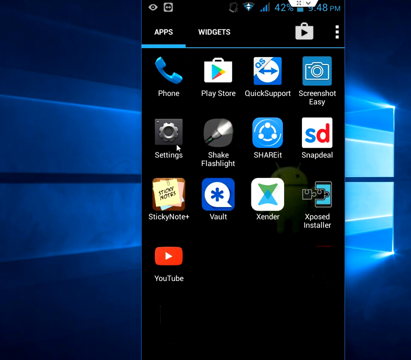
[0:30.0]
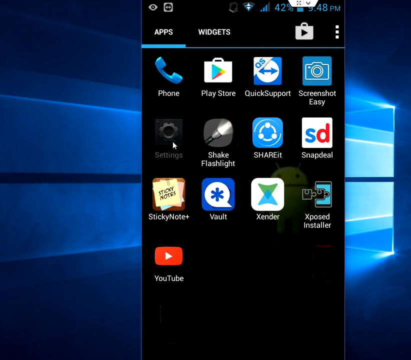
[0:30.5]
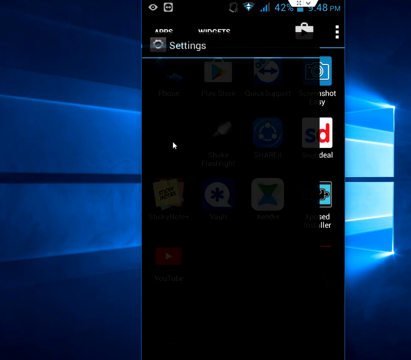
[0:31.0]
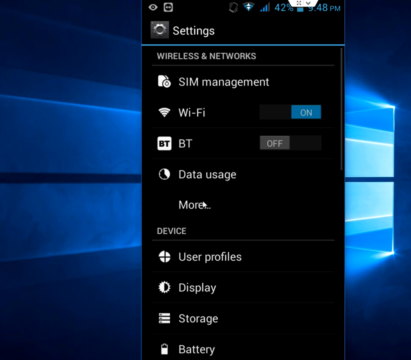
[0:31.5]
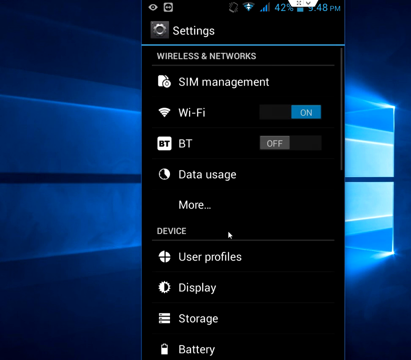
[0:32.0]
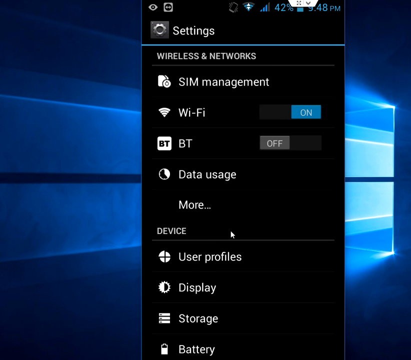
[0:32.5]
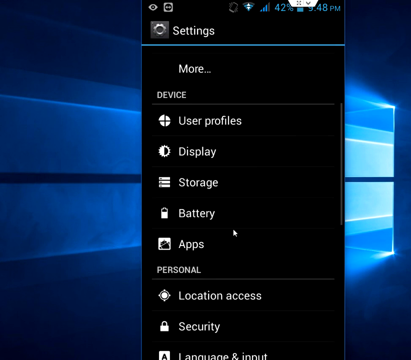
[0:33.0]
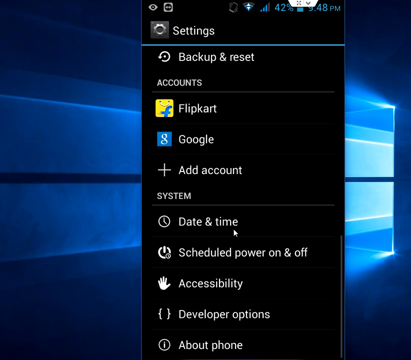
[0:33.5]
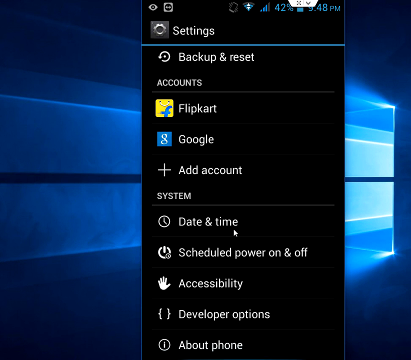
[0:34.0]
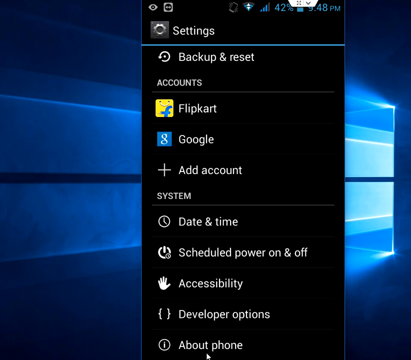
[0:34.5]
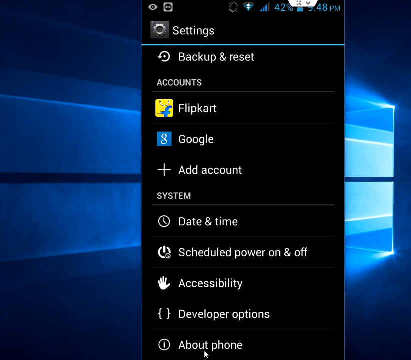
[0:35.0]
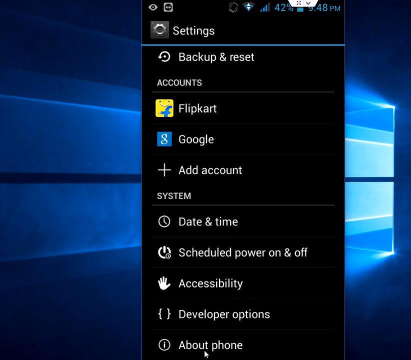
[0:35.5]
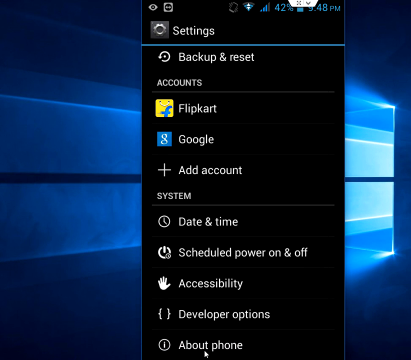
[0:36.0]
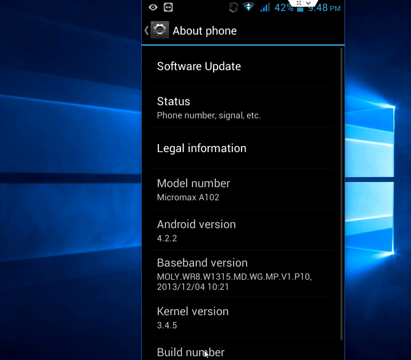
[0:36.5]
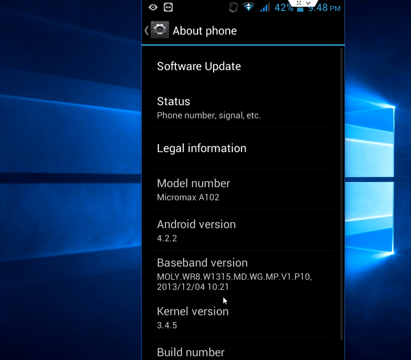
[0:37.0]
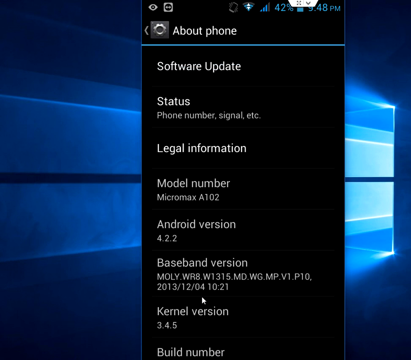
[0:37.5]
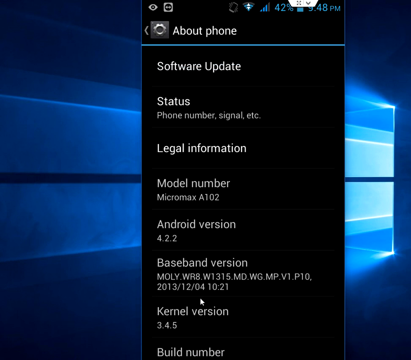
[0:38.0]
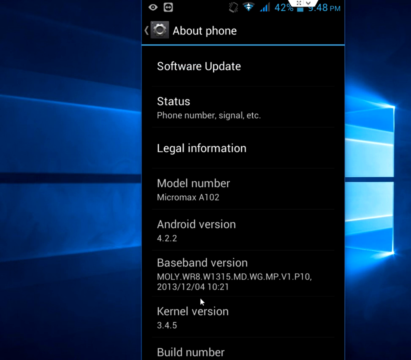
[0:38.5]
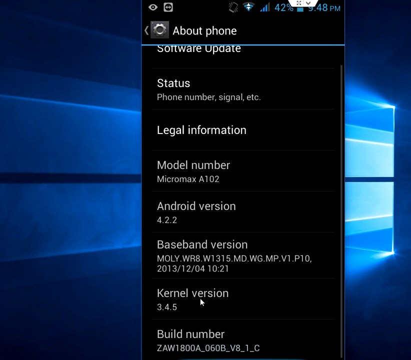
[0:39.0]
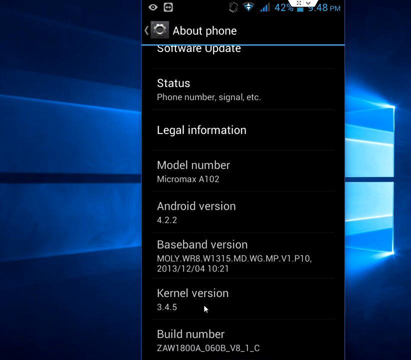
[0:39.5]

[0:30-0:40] The settings section opens. A wireless and network section lists SIM management, Wi-Fi toggled on, BT toggled off, data usage, and a more option with three dots after it. Below it is a heading that says "device", under which are user profiles, display, and storage. The list scrolls down to show battery, location access, security, languages and input, and backup and reset. Under the accounts heading are Flipkart and Google, plus an option to add an account. Under system are date and time, scheduled power on and off, accessibility, and developer options, and below these is about phone. The mouse clicks on about phone and a new screen opens. It shows software update, status with a subheading of phone number, signal, et cetera, legal information, model number showing Micromax A102, Android version showing 4.2.2, baseband version showing "MOLY.WR8.W1315.MD.WG.MP.V1.P10.A102" followed by "2.13.12.04" with a time of 10.21, kernel version showing 3.4.5, and then build number. The mouse clicks on build number.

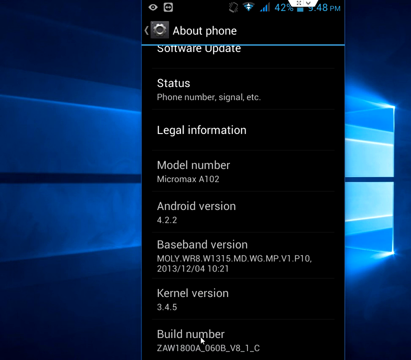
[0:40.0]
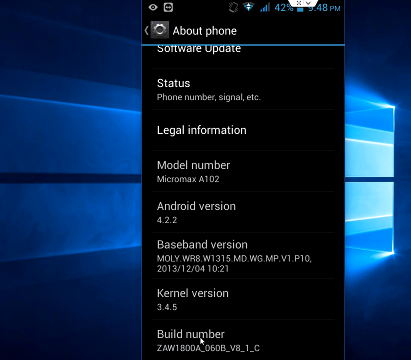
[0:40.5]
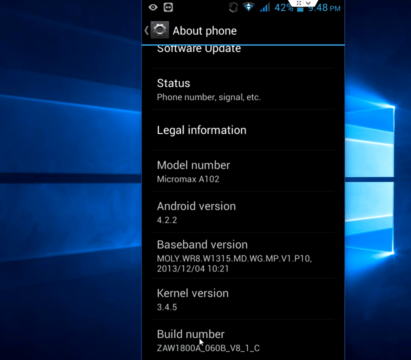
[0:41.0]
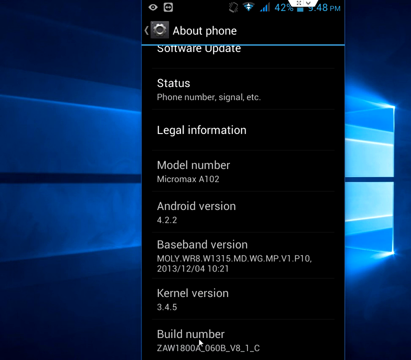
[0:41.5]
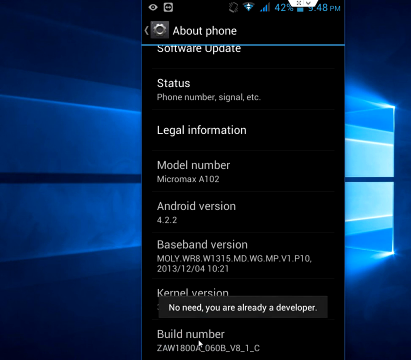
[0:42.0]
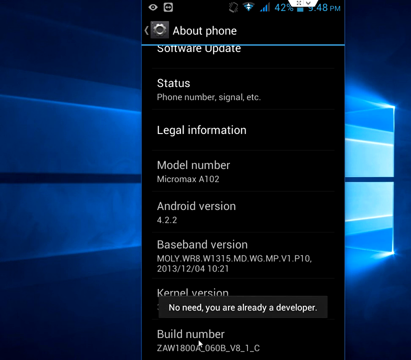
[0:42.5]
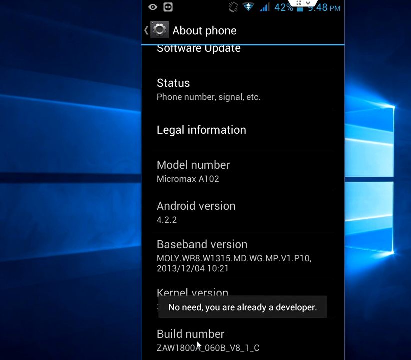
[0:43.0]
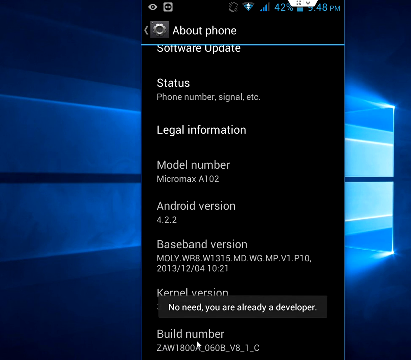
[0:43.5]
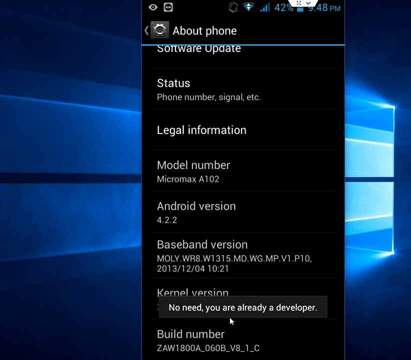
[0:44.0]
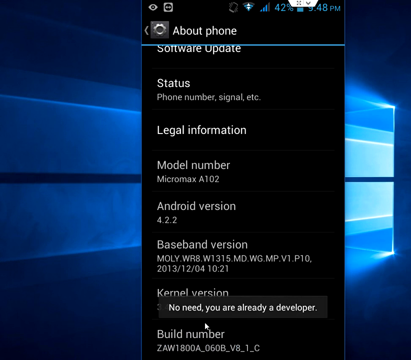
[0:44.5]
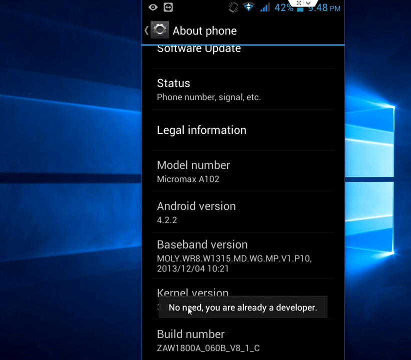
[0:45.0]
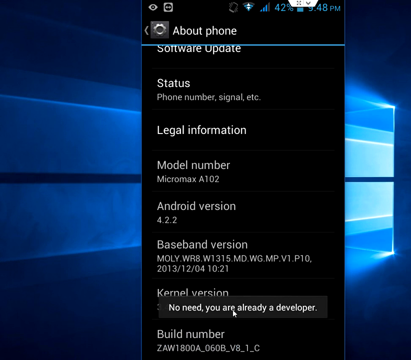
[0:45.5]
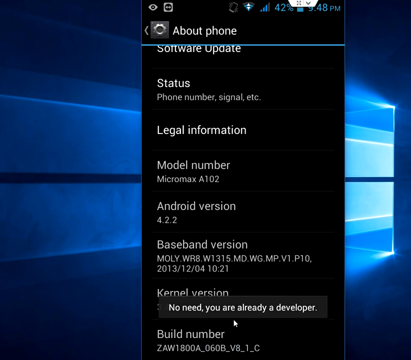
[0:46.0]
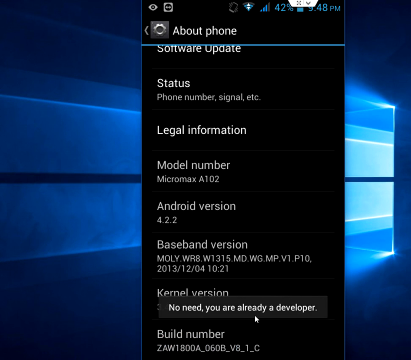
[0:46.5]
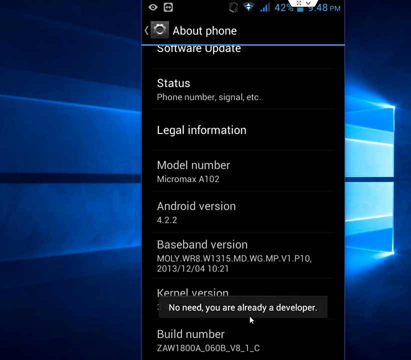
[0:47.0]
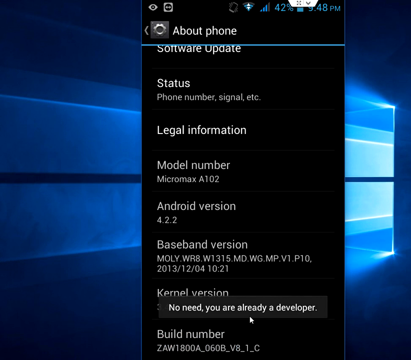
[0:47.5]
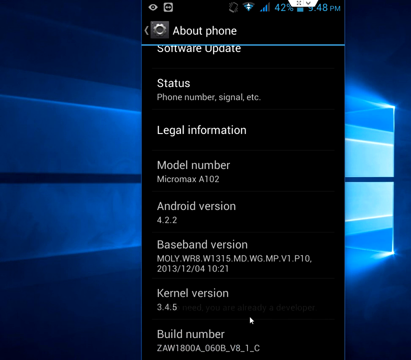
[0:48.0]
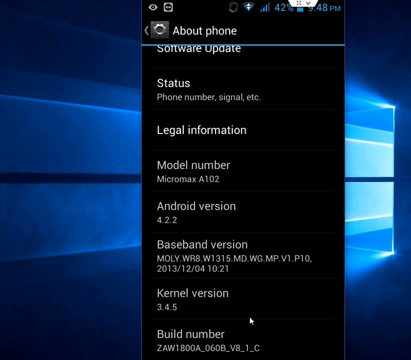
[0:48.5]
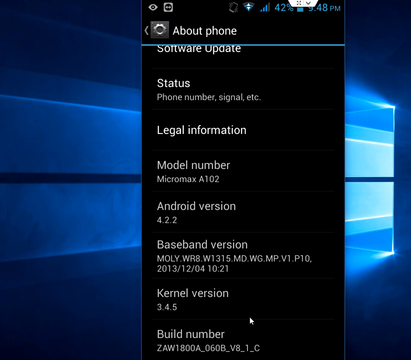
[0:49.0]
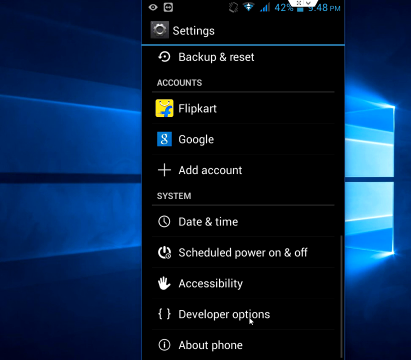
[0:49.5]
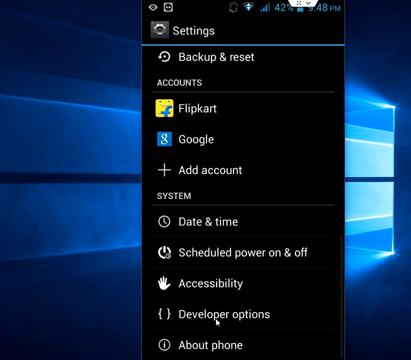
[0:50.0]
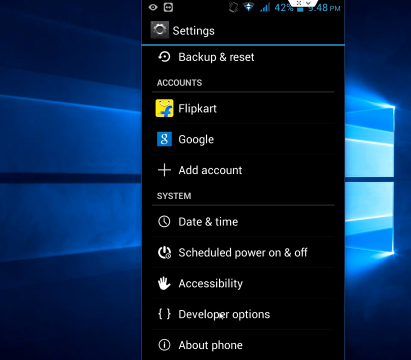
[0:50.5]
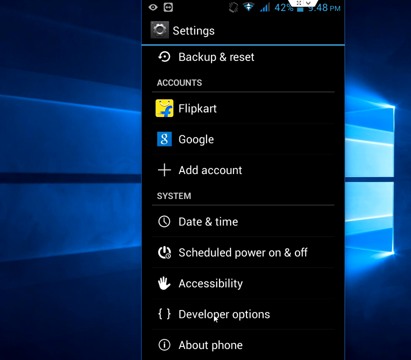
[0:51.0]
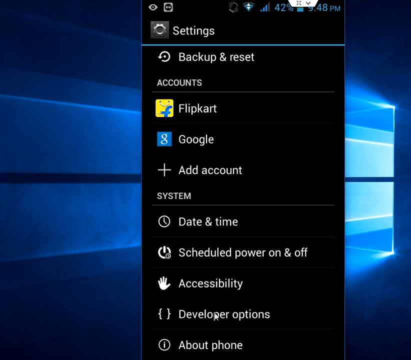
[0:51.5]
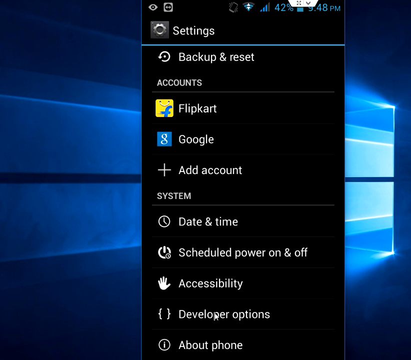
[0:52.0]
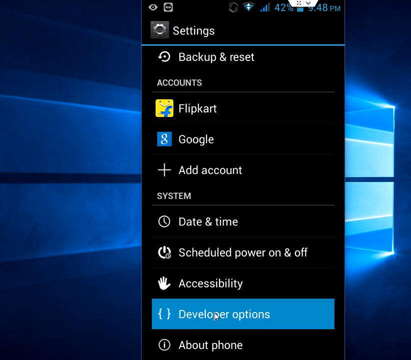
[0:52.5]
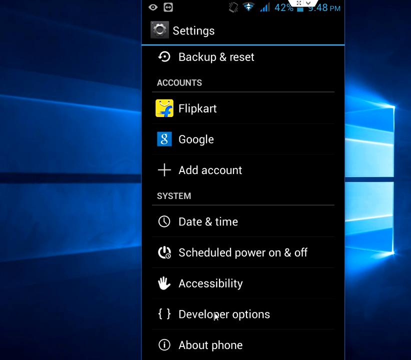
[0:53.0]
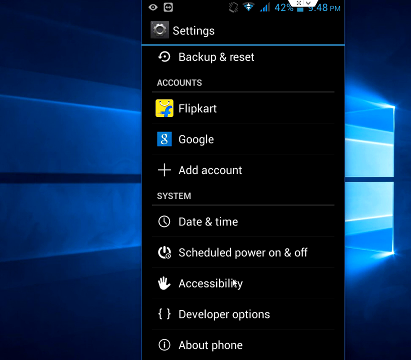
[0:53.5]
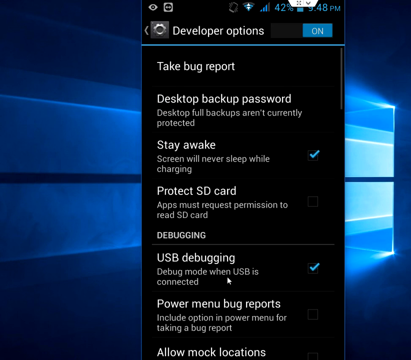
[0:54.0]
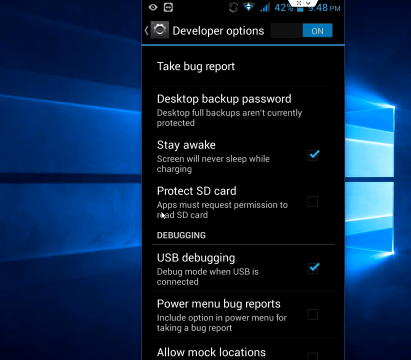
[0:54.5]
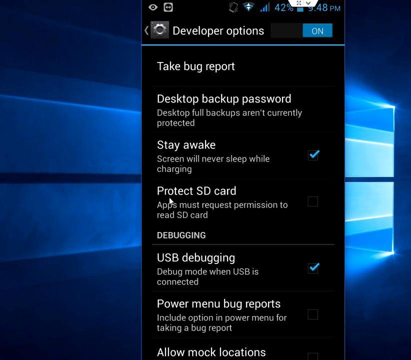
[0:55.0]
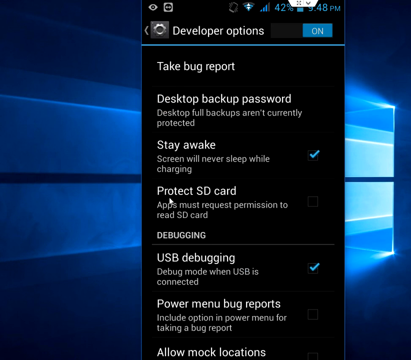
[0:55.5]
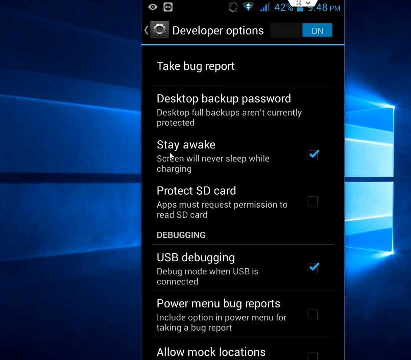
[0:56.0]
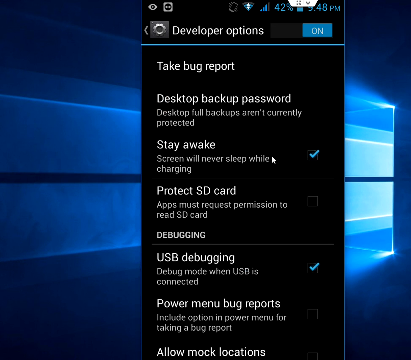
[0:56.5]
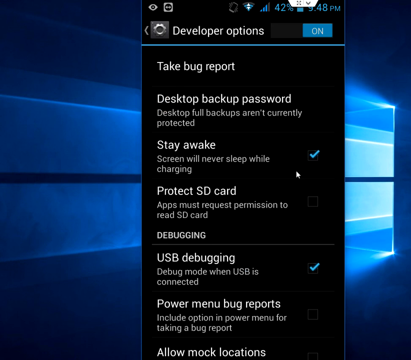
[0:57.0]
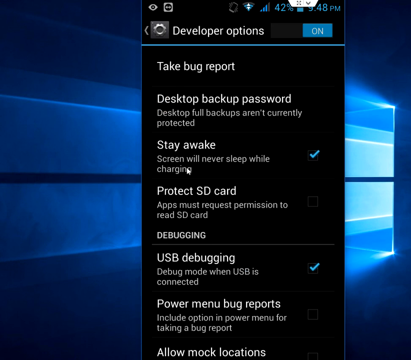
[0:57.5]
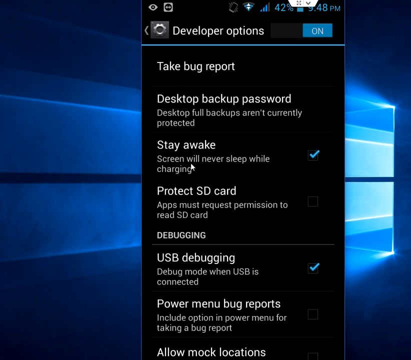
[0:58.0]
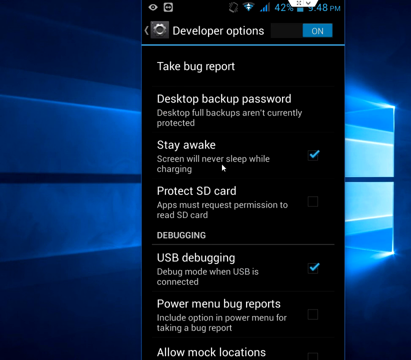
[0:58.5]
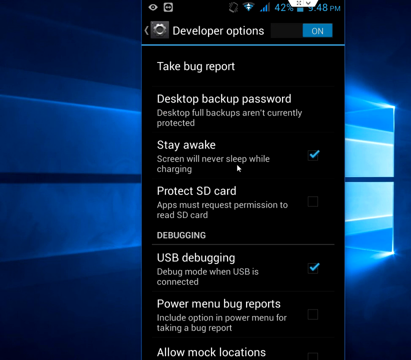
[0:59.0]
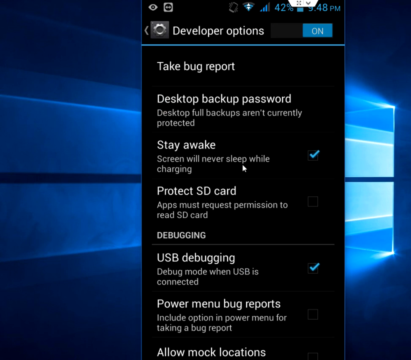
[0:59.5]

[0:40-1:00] The mouse repeatedly tries to click on build number, and an error message appears that says "no need, you are already a developer". The mouse moves back and forth over the error message, which then disappears. The mouse goes to the developer options section, moves back and forth a few times, and clicks on it, turning the option teal. A new developer options screen appears, with a toggle at the top showing developer options toggled on. Below it are "take bug report", then "desktop backup password" with the subtext "desktop full backups aren't currently protected", then an option with the text "screen will never sleep while charging" with a teal checkmark beside it. Next is "protect SD card" with the subtext "apps must request permission to read SD card". A debugging section follows a line break; under it is a header of "USB debugging" with a subheader of "debug mode when USB is connected", also with a teal checkmark beside it. The next header says "power menu bug reports" with a subheader of "include option in power menu for taking a bug report". The mouse hovers over protect SD card before moving to stay awake, where it moves horizontally over the option.